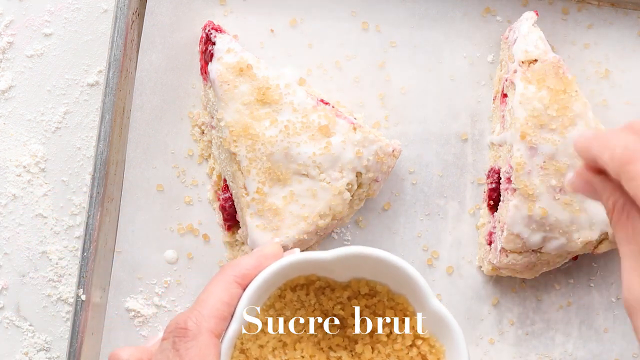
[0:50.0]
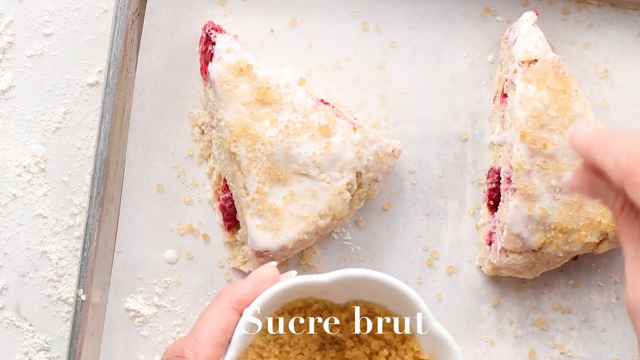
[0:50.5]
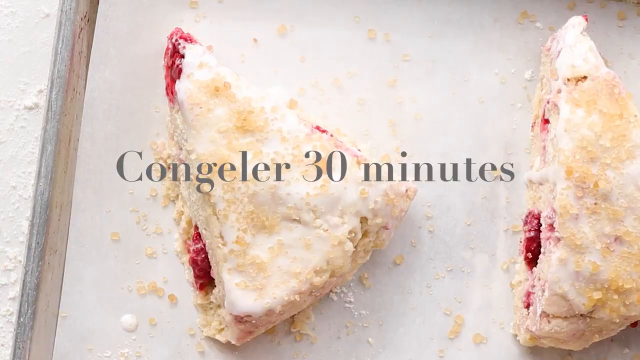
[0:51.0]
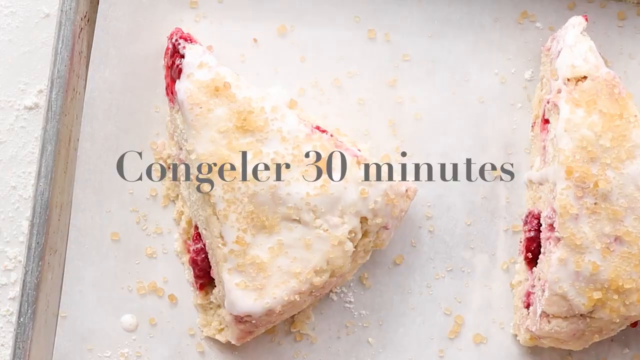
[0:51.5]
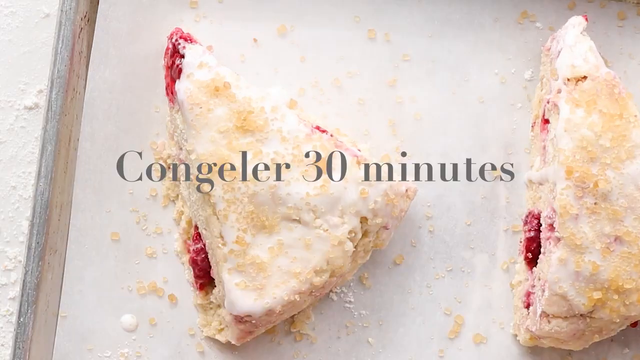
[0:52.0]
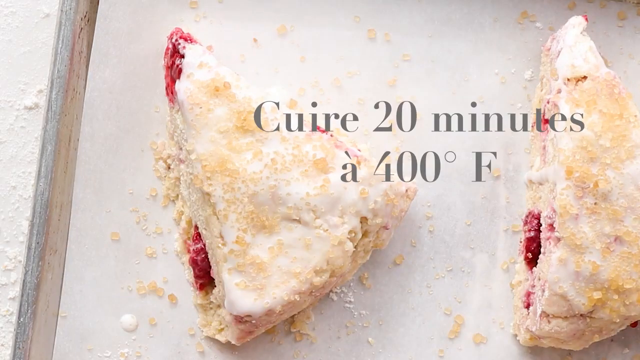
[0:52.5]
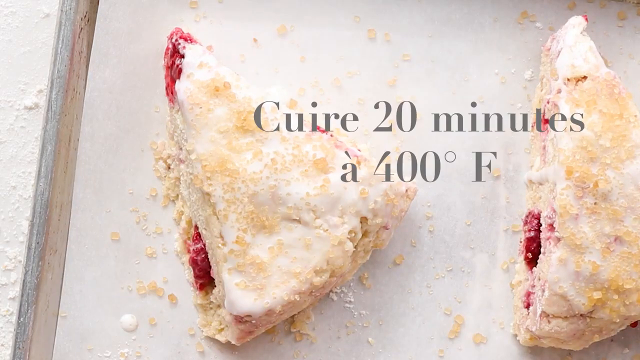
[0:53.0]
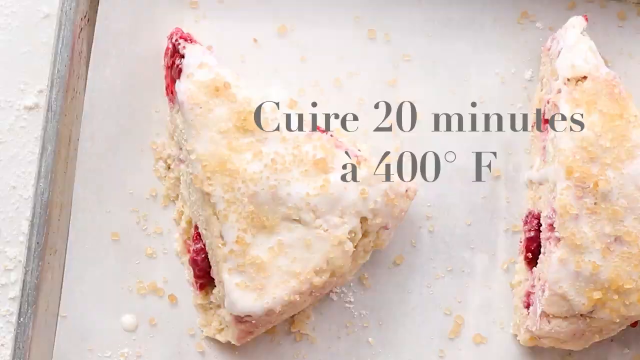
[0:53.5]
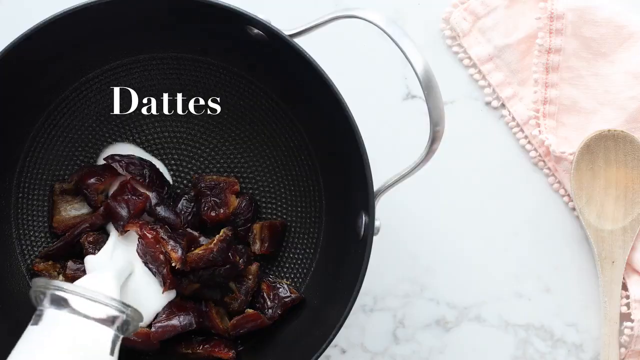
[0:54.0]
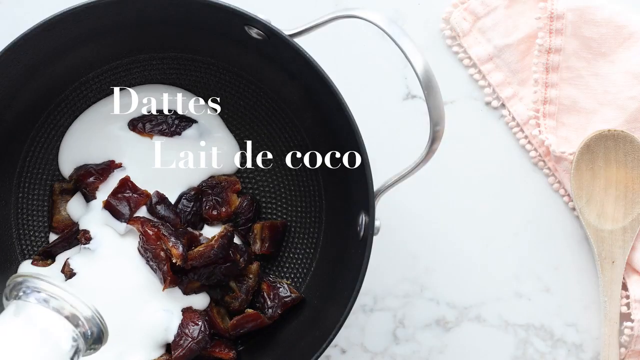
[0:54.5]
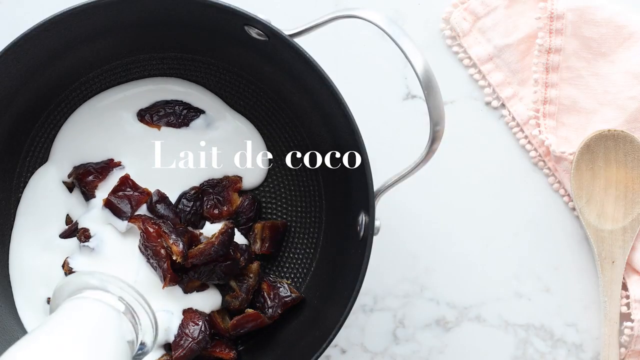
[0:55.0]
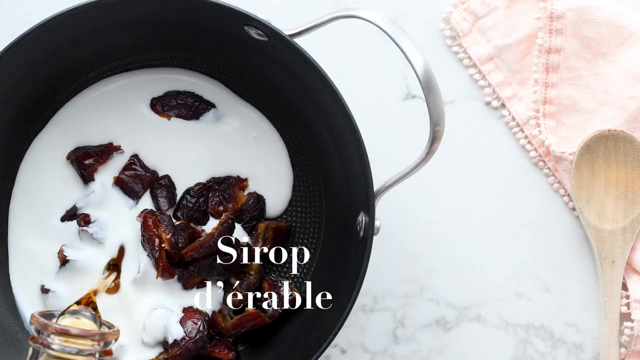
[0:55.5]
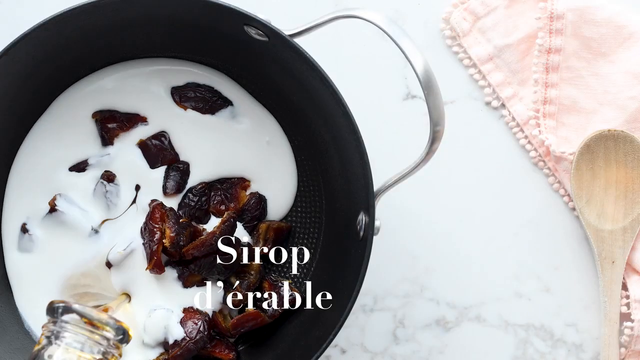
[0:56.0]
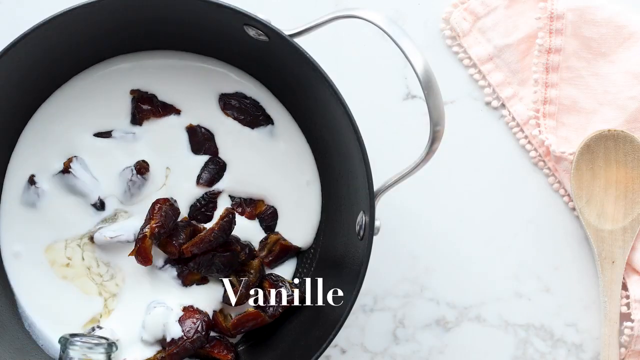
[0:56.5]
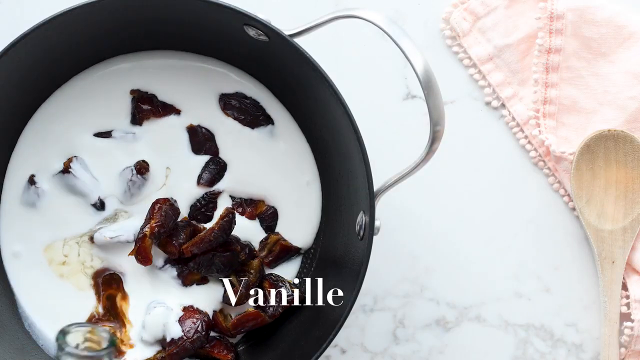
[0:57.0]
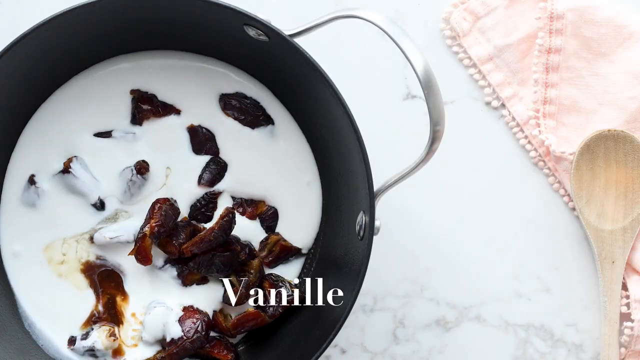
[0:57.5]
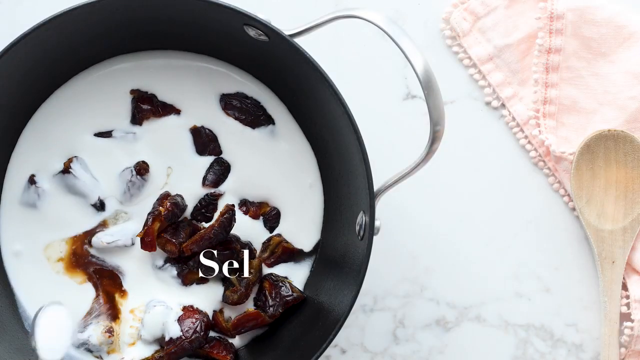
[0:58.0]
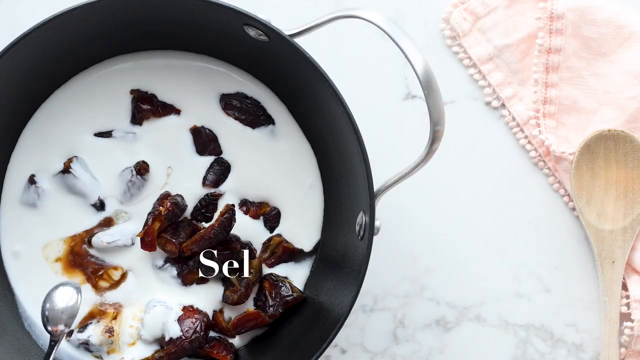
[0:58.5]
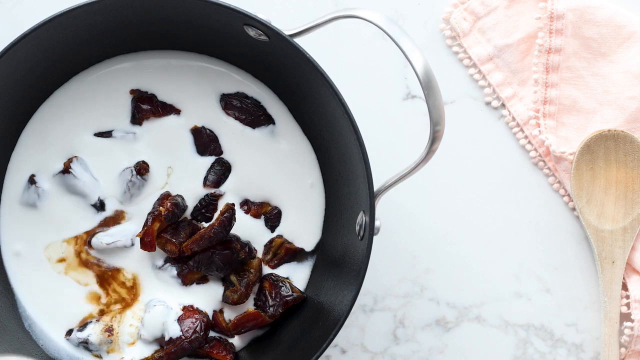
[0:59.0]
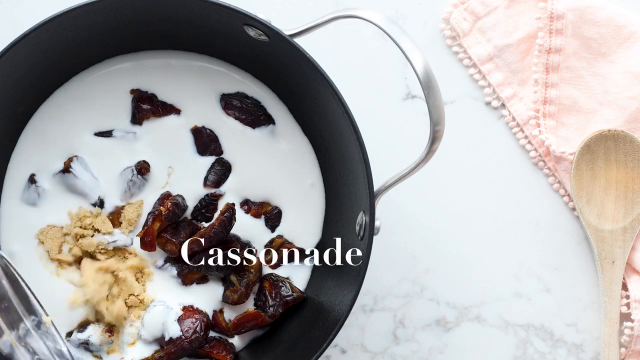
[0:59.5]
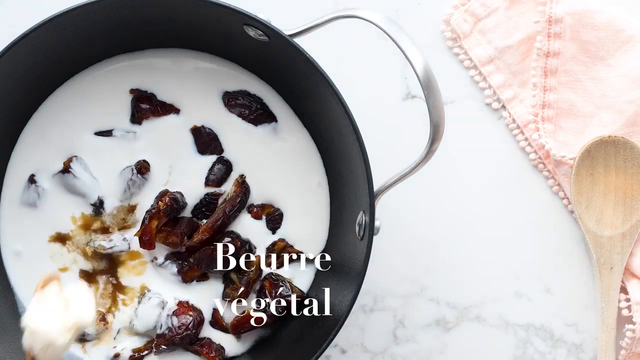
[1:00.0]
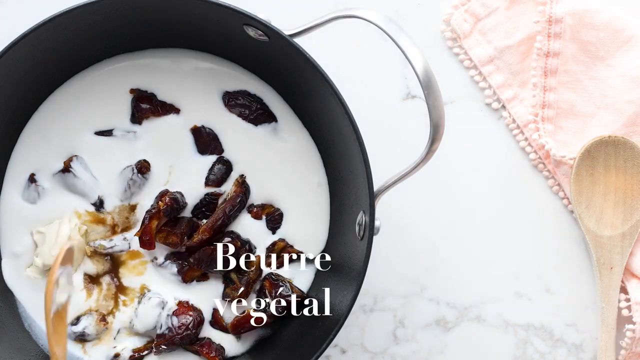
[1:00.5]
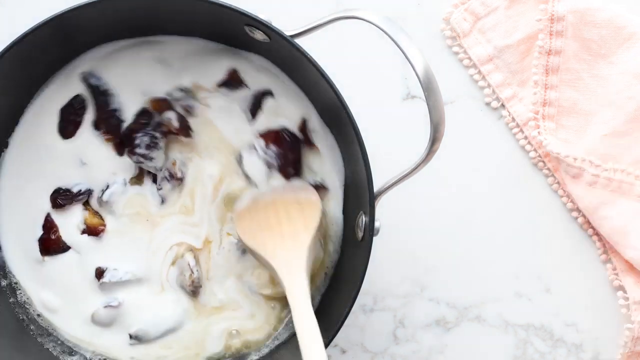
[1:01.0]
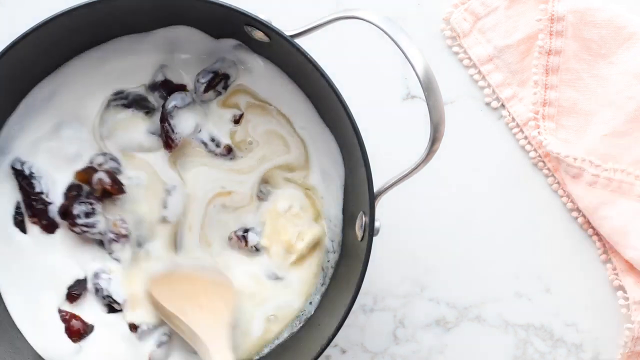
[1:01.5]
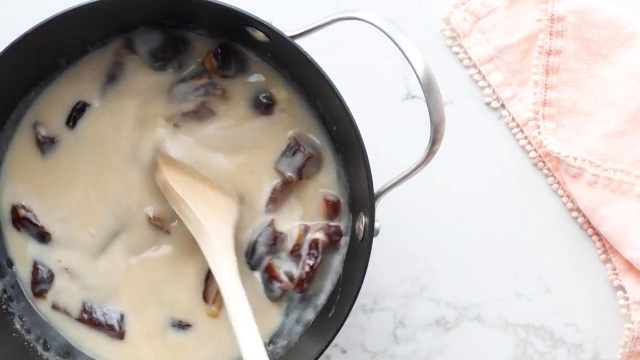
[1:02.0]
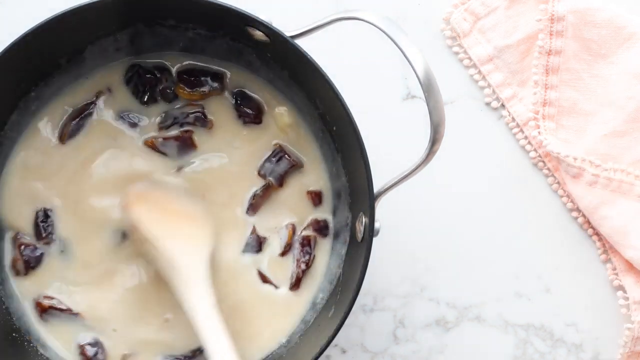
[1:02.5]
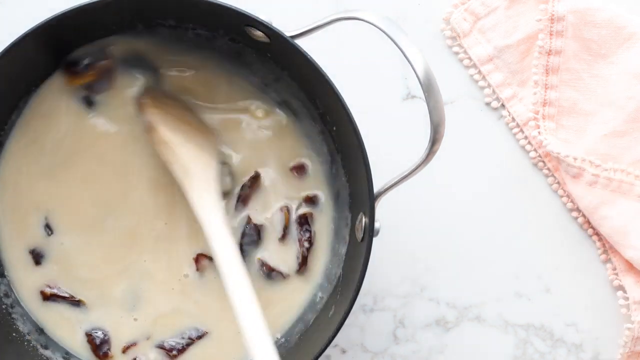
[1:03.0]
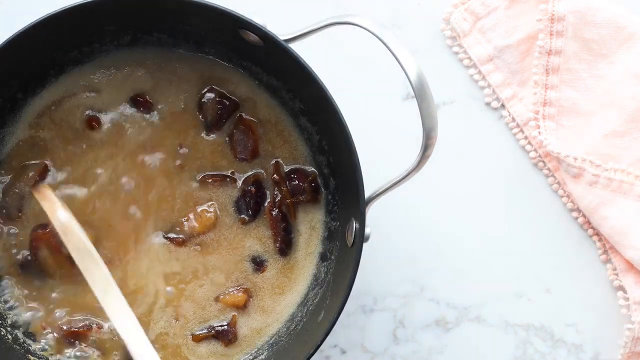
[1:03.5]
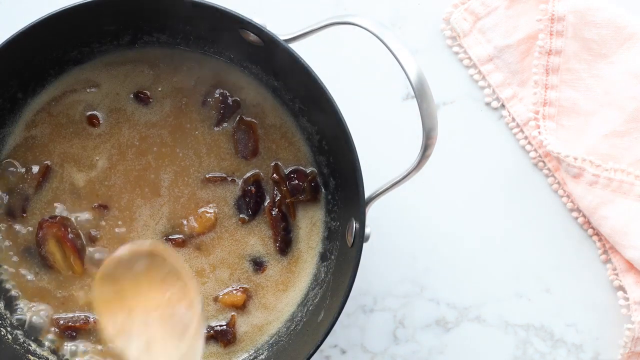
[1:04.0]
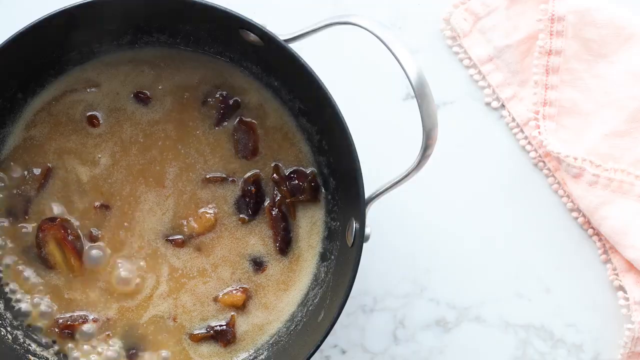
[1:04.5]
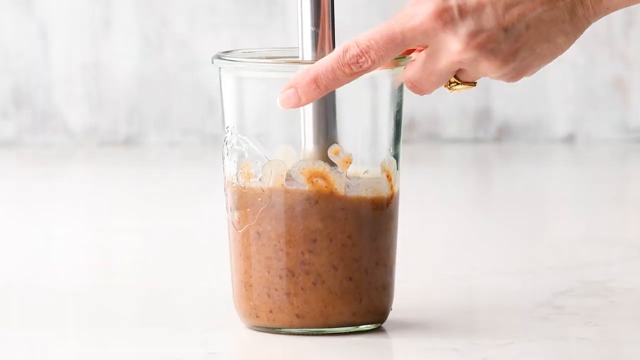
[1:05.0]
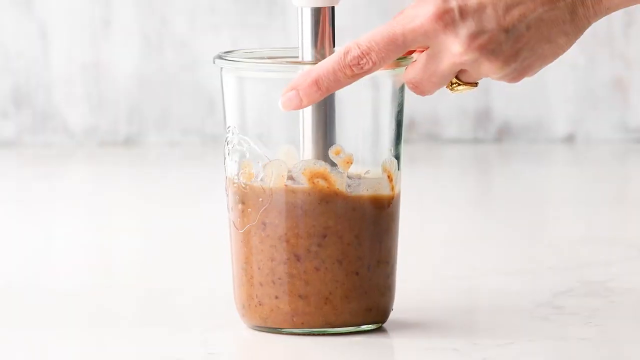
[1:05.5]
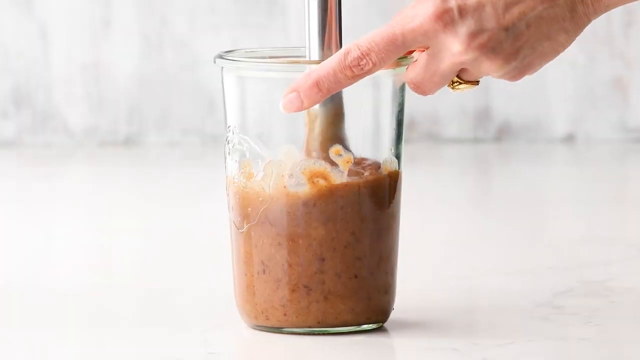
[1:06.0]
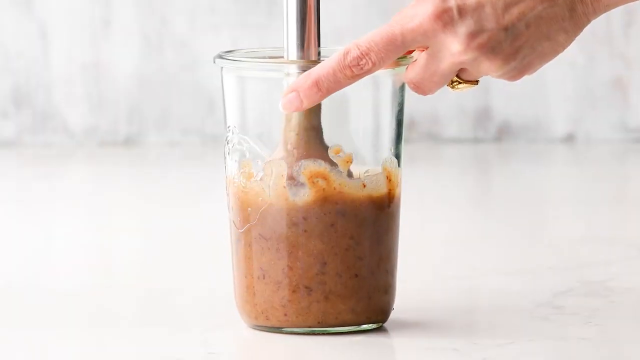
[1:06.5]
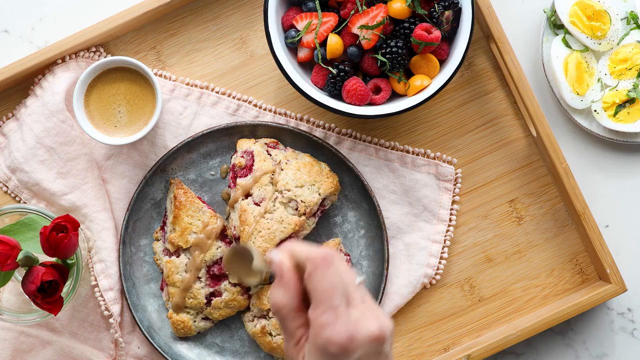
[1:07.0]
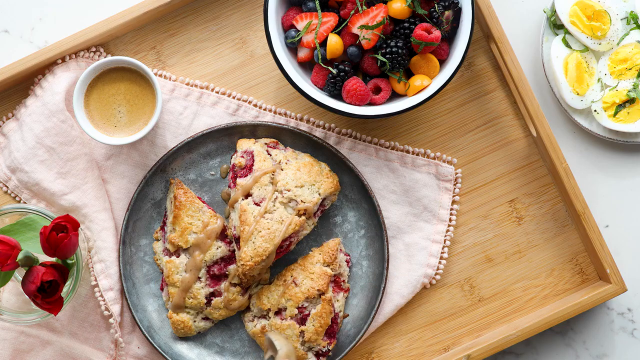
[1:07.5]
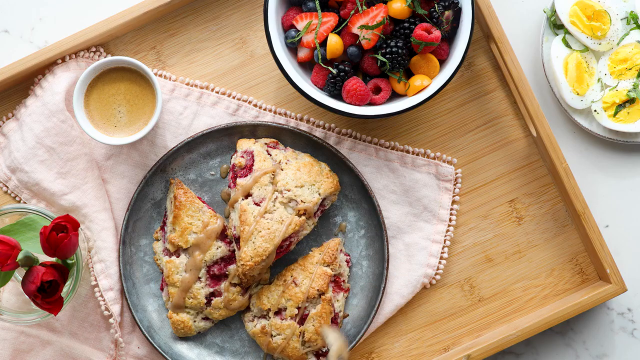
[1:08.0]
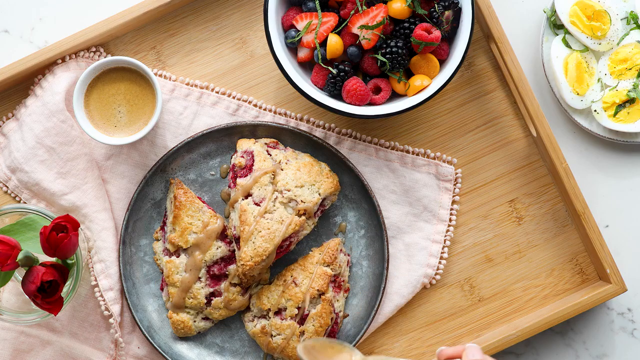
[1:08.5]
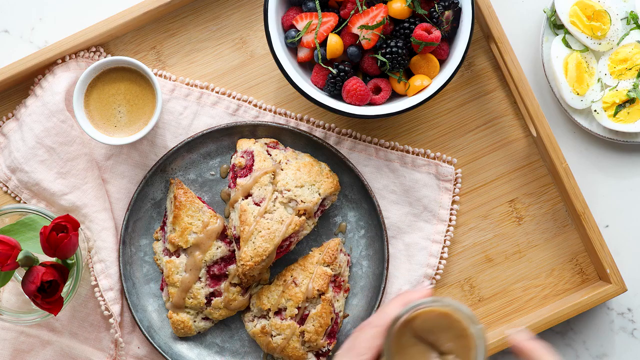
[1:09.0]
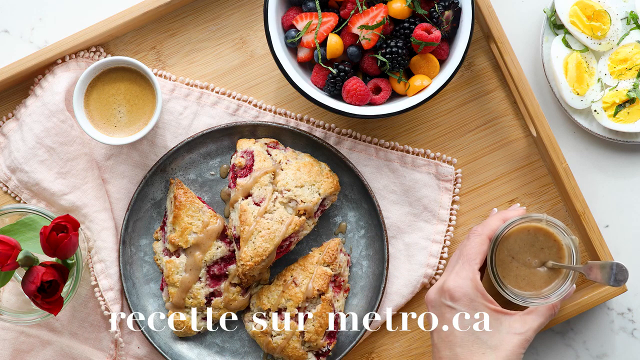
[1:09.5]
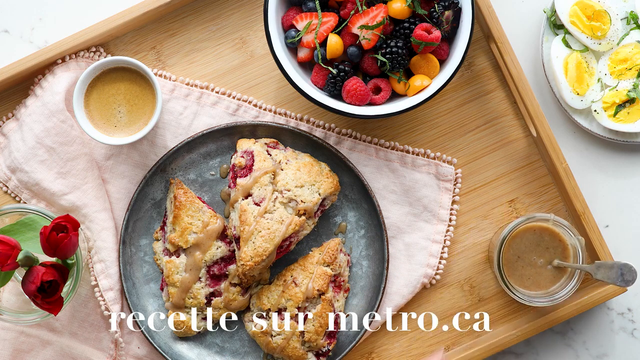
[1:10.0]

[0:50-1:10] The woman continues sprinkling brown sugar on top of the slices. The video cuts to a shot of the prepared slices with the words "congeller 30 minutes" on the screen, apparently suggesting they need to set for 30 minutes before the next step. The words "cure 20 minutes at 400F" then appear, seemingly indicating they are baked in an oven at 400 degrees Fahrenheit for 20 minutes. Next, a colander full of dates is shown, and latte de coco is added to it along with some sort of syrup and vanilla, plus other ingredients named in French. A spoon stirs everything together, and the mixture appears to be boiled under heat, turning brown. A blender is then pressed down inside a bowl. Finally, the tray seen at the beginning of the video appears, with the completed tart on a plate being readied with additional sugar for presentation.